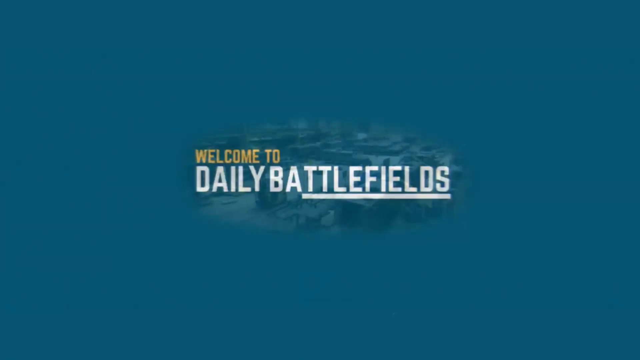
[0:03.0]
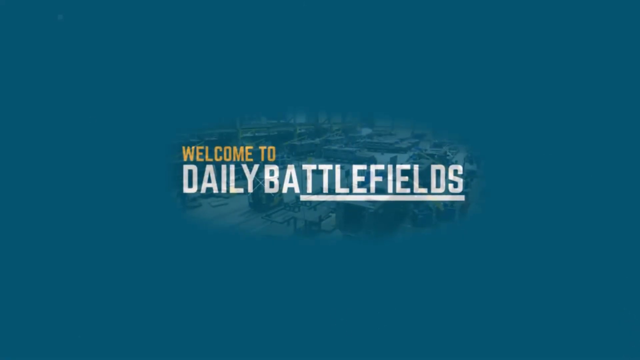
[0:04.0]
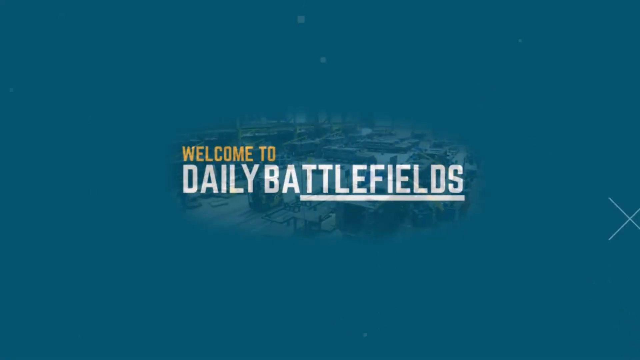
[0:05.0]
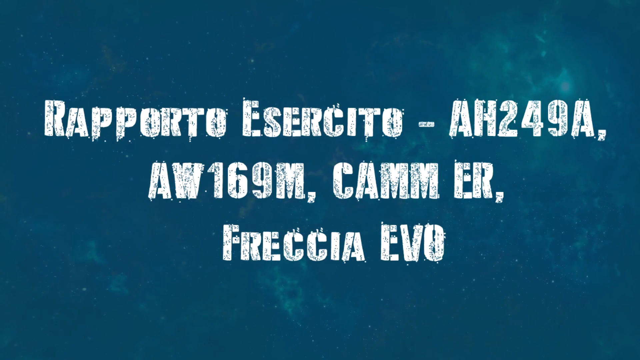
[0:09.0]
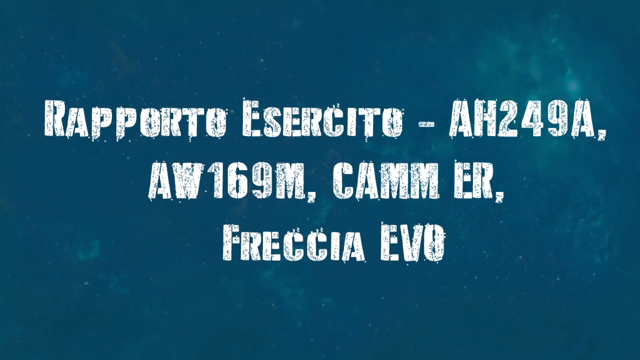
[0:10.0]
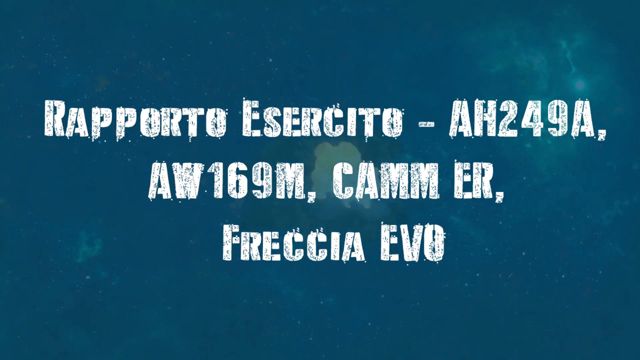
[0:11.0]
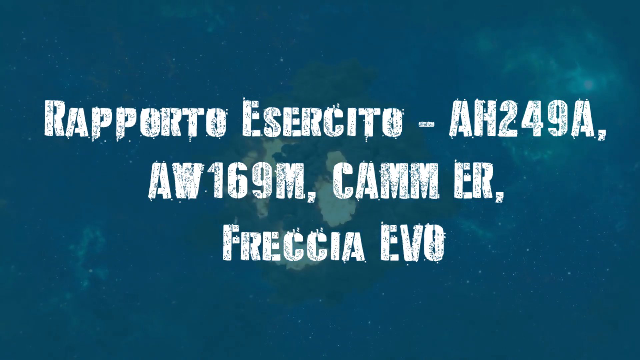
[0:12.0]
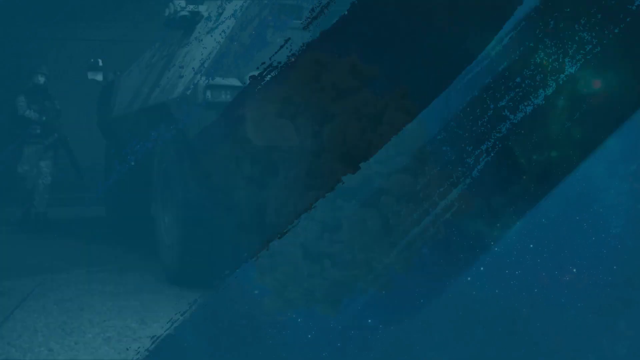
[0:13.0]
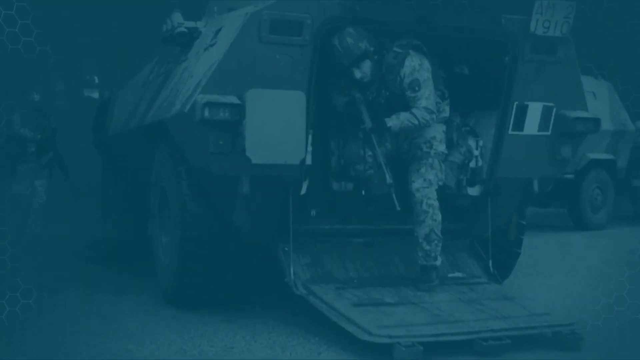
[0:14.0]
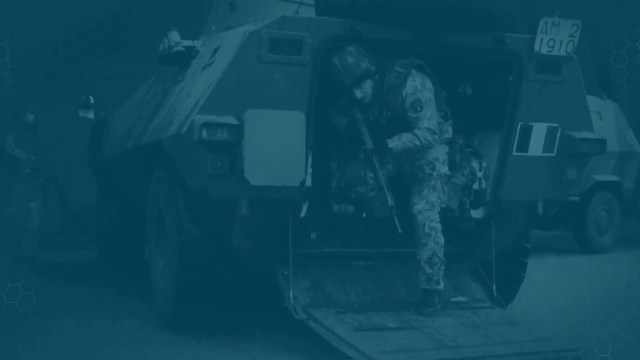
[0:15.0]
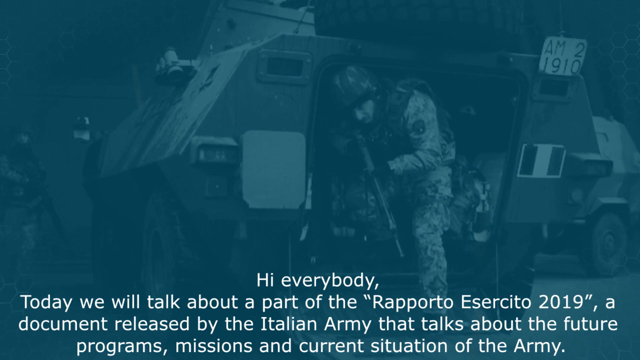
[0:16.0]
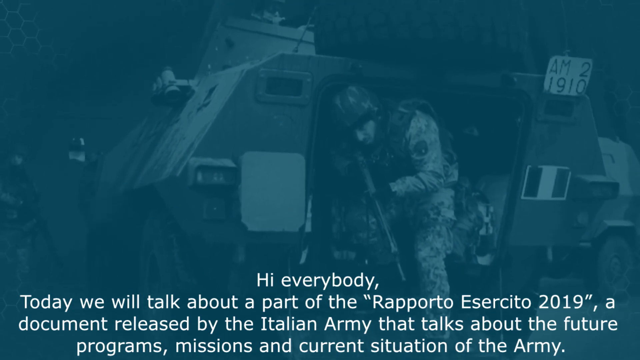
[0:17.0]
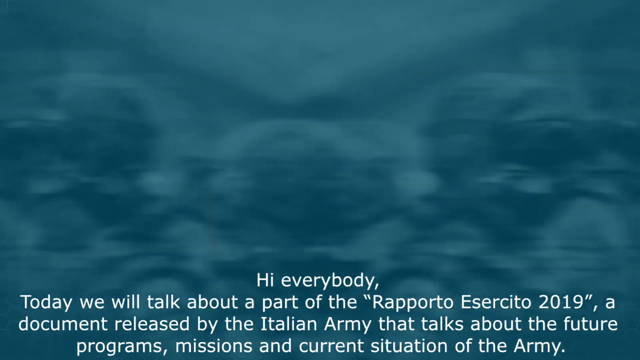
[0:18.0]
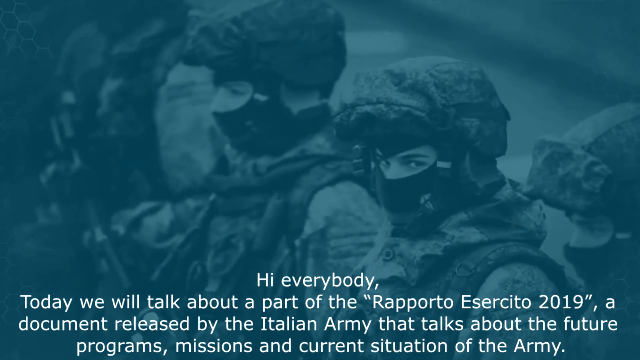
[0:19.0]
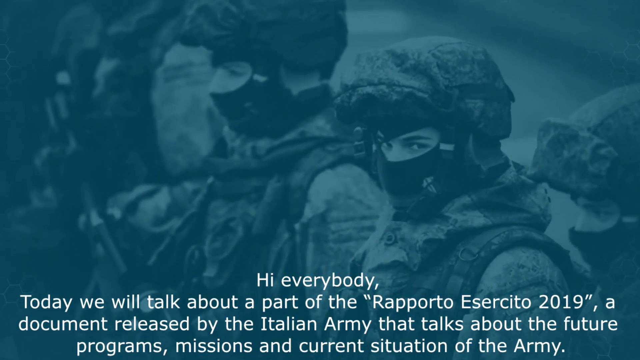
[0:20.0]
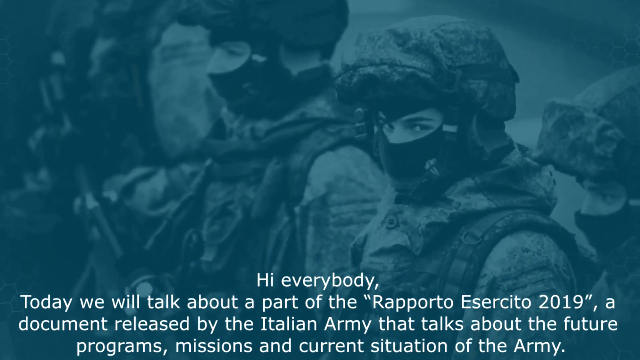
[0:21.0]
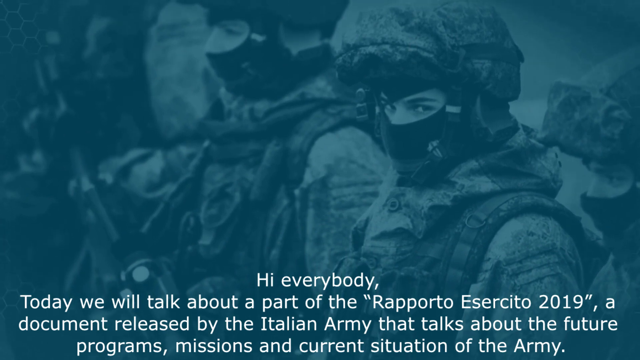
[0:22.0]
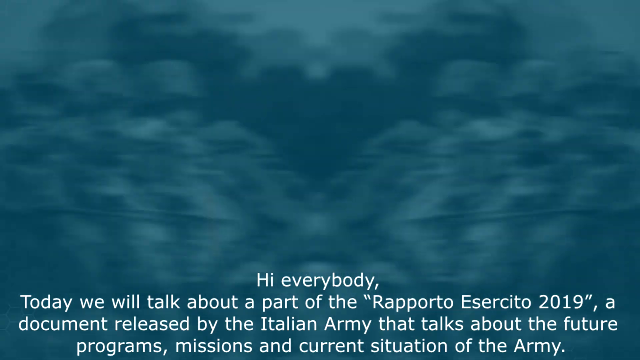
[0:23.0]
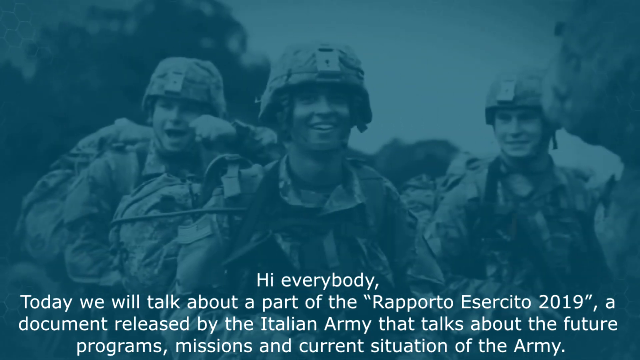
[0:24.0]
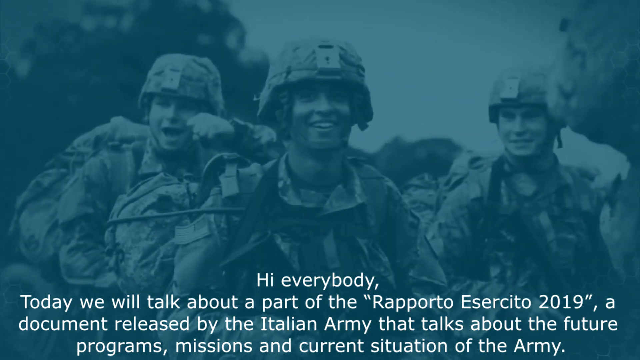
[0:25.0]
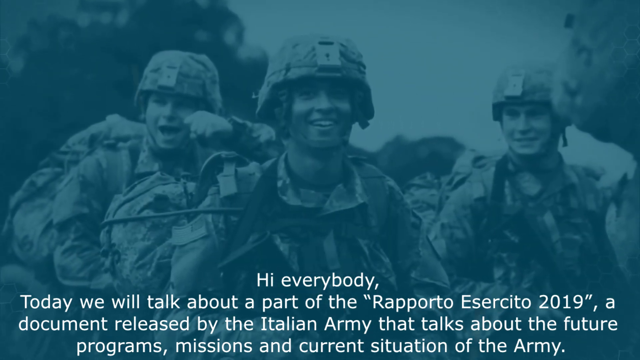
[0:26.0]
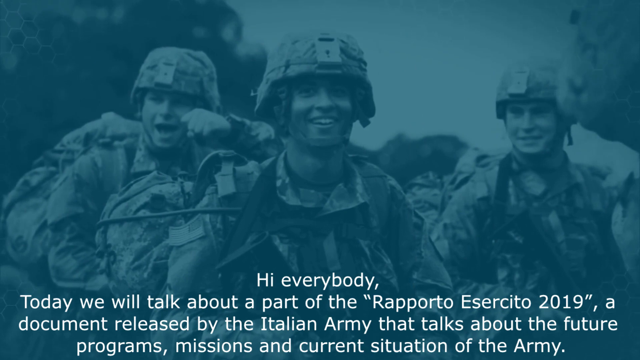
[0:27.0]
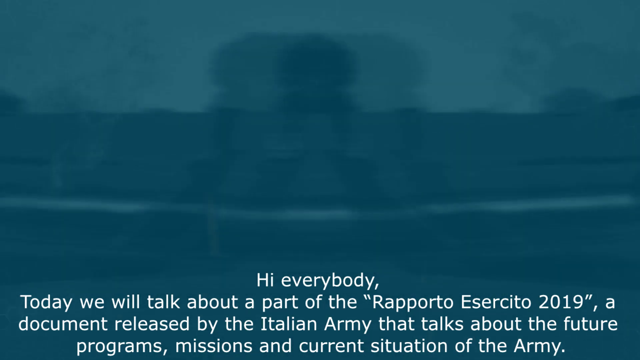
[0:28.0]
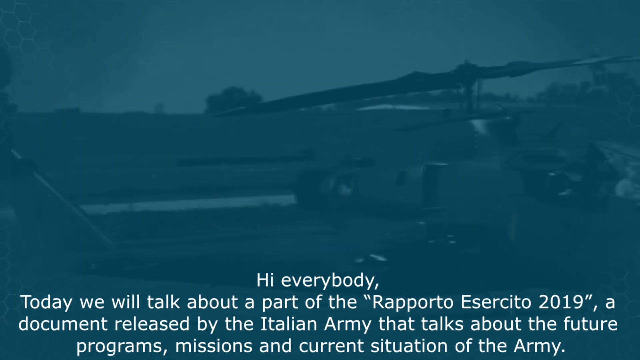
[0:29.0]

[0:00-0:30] The video opens on a dark blue background, and the words "Welcome to daily battlefields" pop up. That label goes down, the screen turns black, and then a blue background with kind of splotches pops up, with white writing appearing on it. A lightning bolt comes down in the middle of the writing and shoots out a large flame and some smoke. The screen then changes to what looks like a soldier and some type of equipment, holding a rifle, and white words pop up at the bottom of the screen: "Hi everybody. Today we will talk about a part of the Rapporto Esercito 2019. A document released by the Italian Army that talks about the future." In the background, multiple images of army soldiers and equipment cycle through.